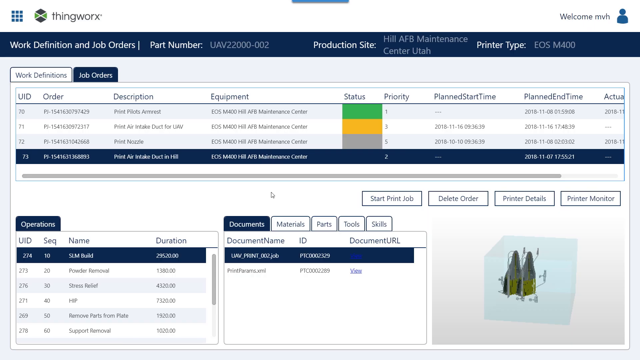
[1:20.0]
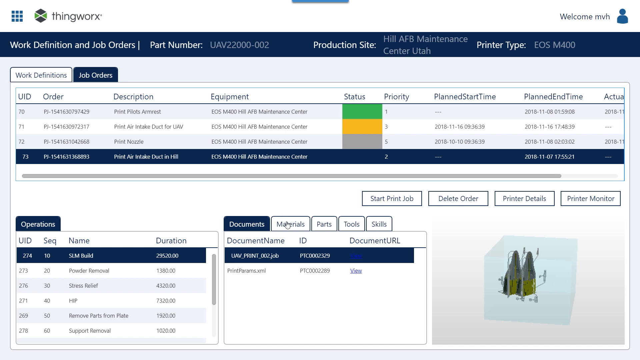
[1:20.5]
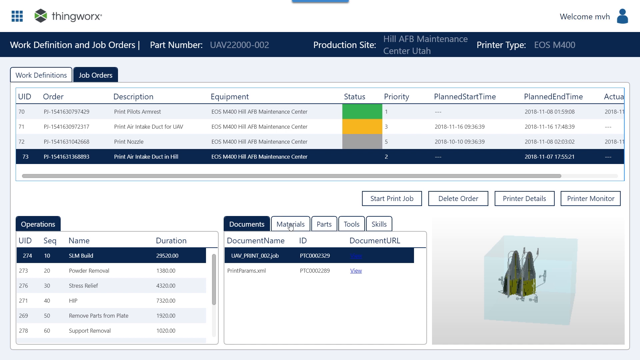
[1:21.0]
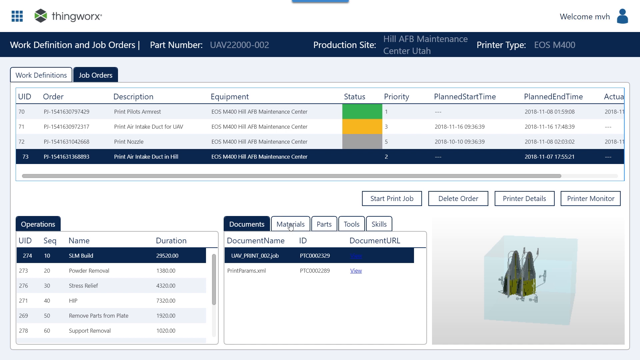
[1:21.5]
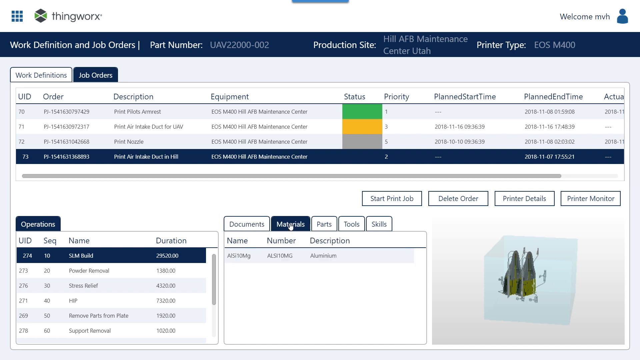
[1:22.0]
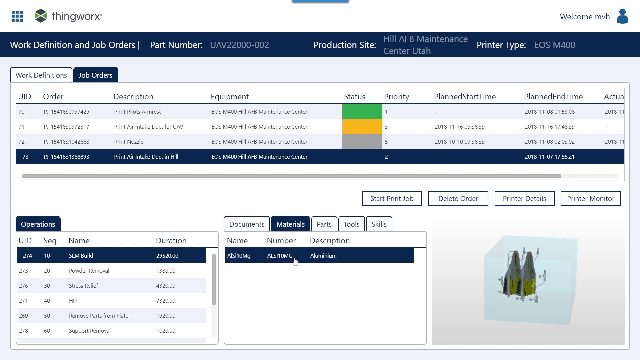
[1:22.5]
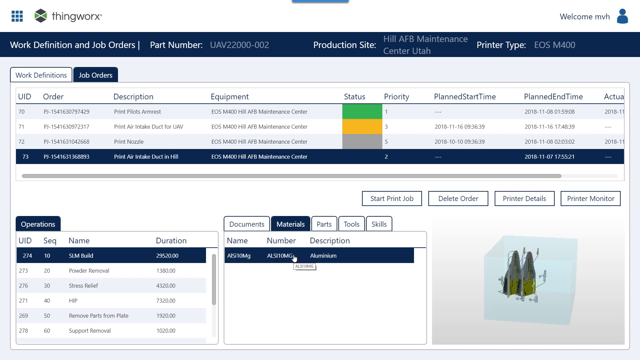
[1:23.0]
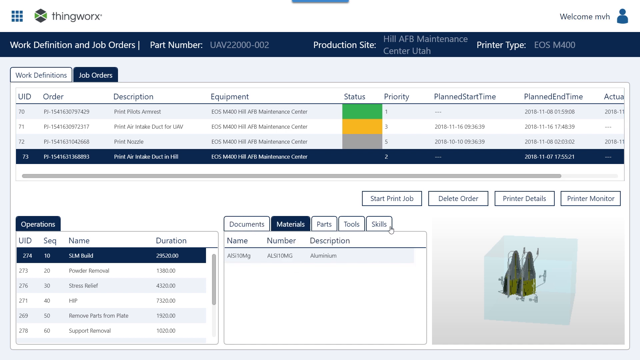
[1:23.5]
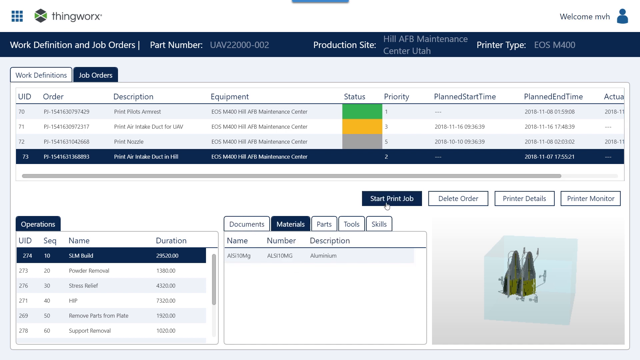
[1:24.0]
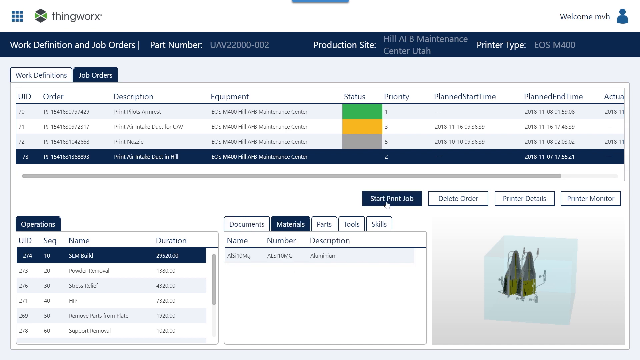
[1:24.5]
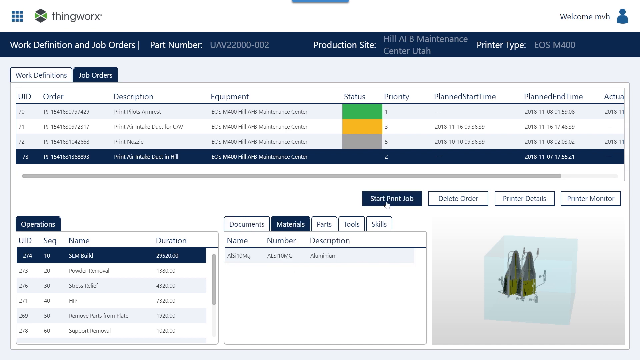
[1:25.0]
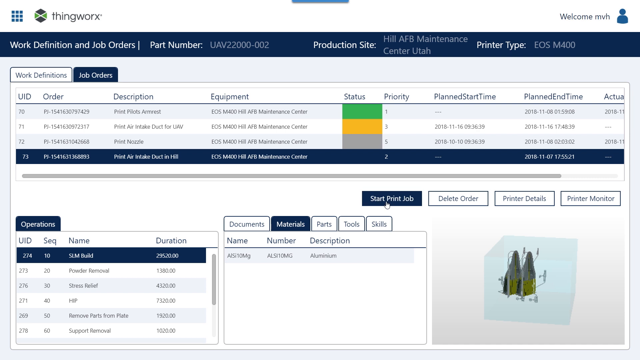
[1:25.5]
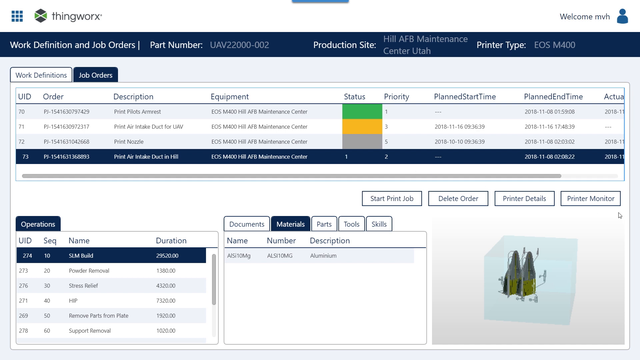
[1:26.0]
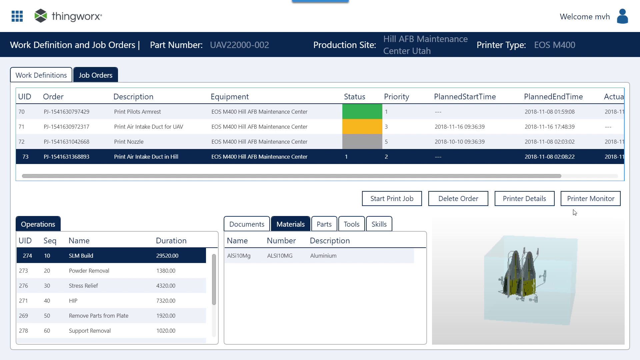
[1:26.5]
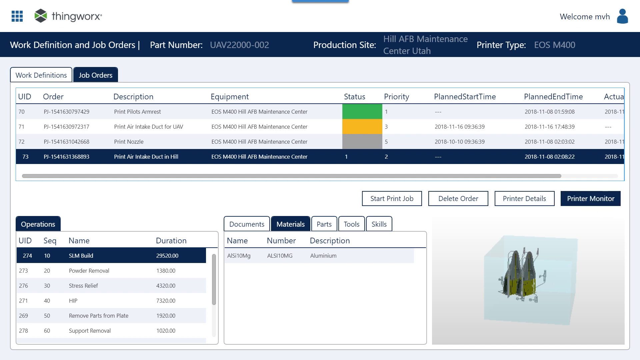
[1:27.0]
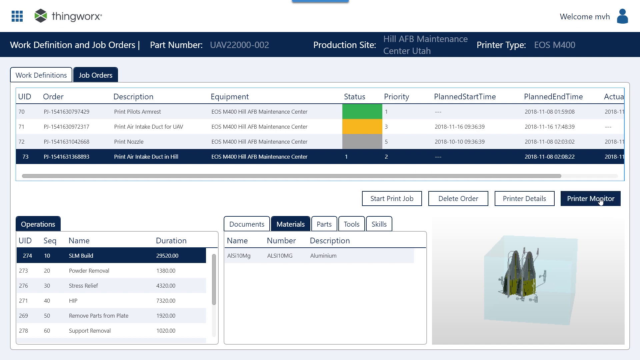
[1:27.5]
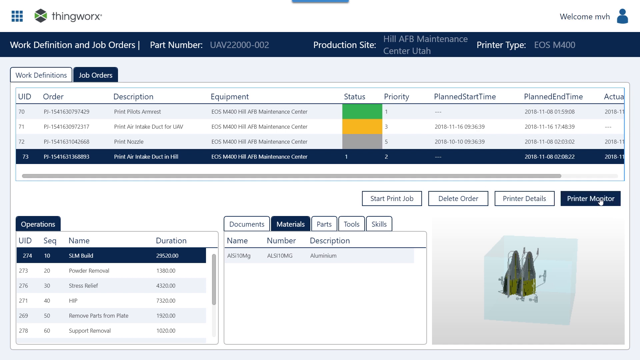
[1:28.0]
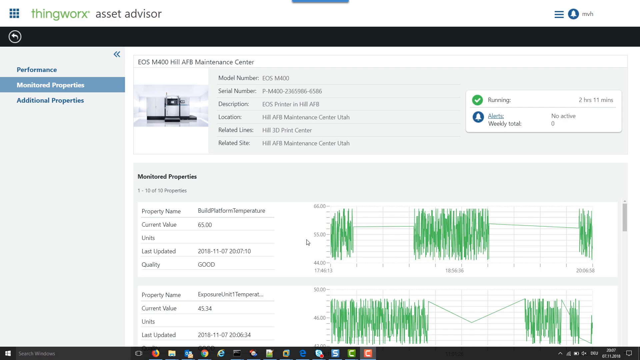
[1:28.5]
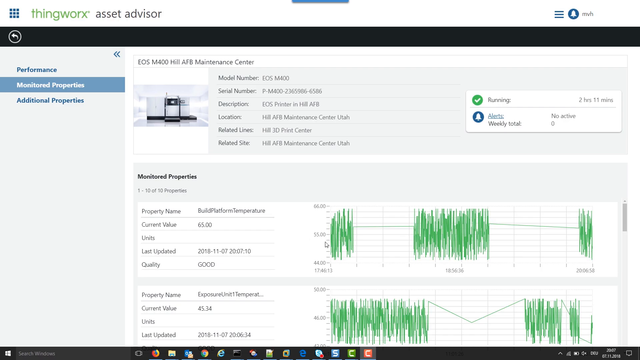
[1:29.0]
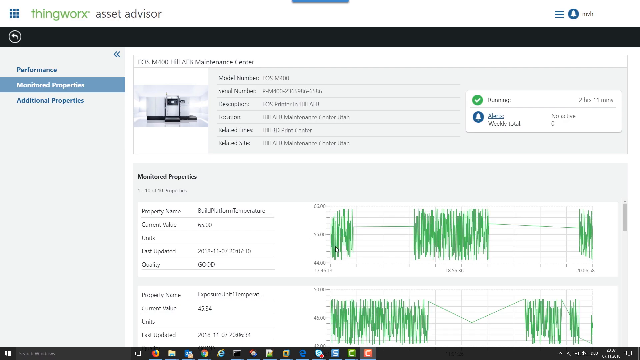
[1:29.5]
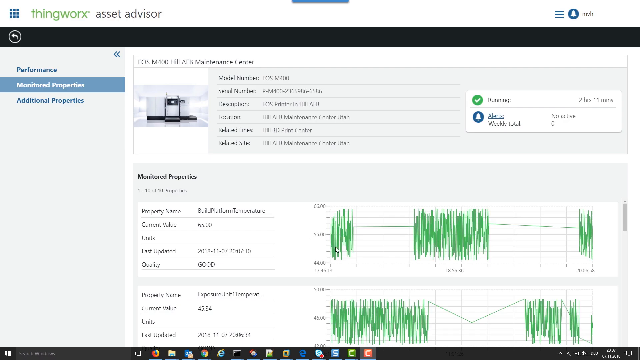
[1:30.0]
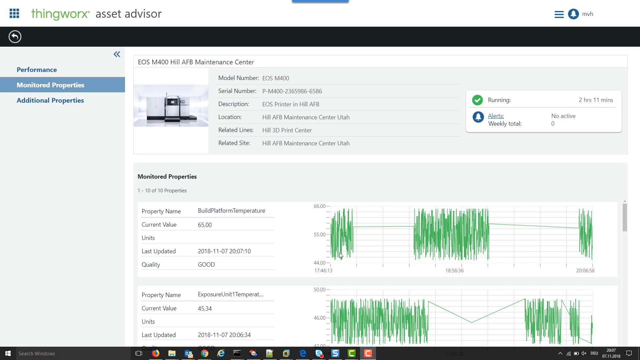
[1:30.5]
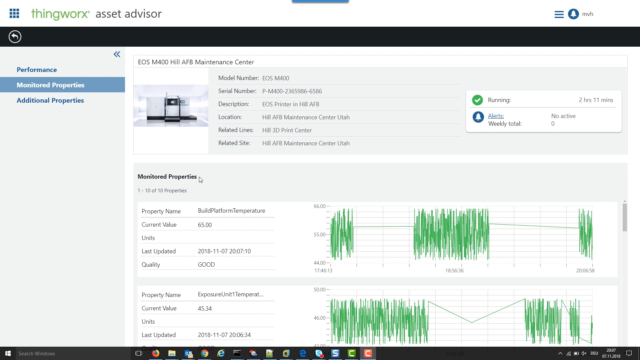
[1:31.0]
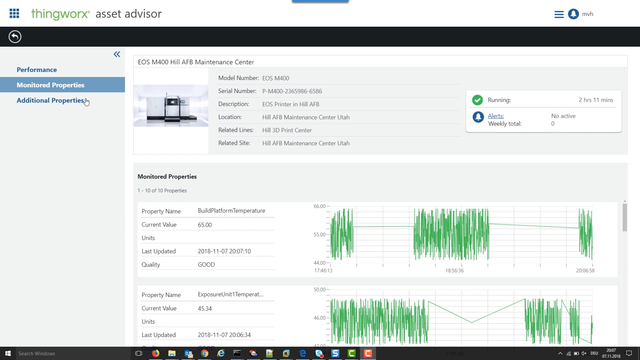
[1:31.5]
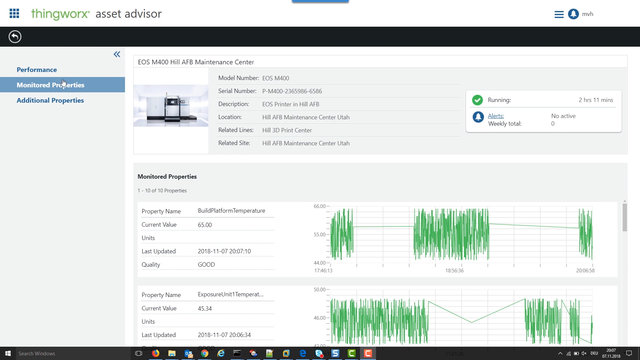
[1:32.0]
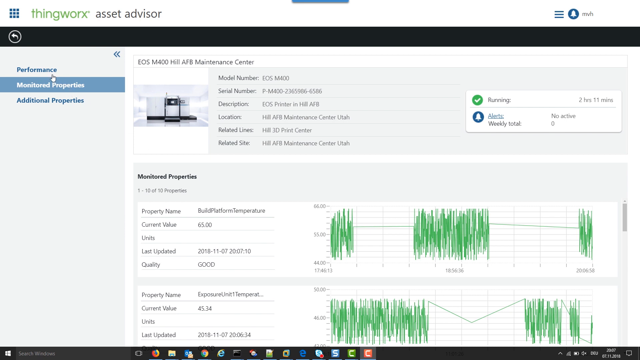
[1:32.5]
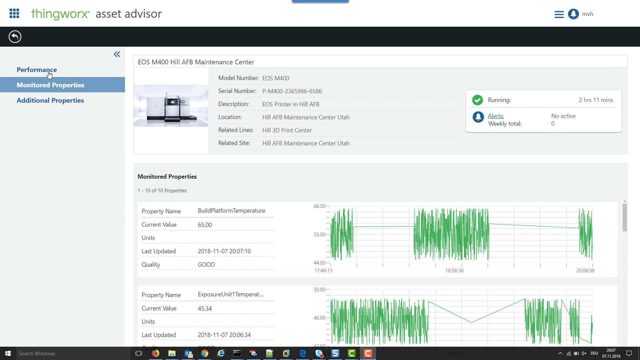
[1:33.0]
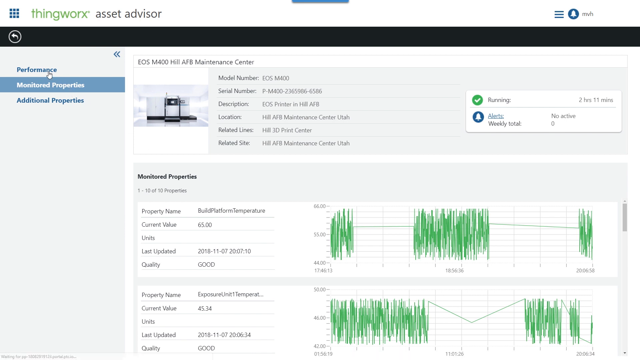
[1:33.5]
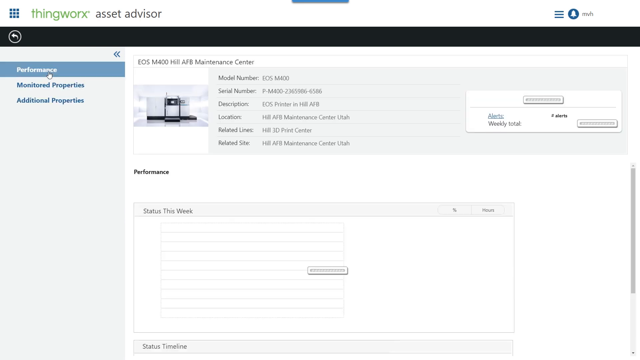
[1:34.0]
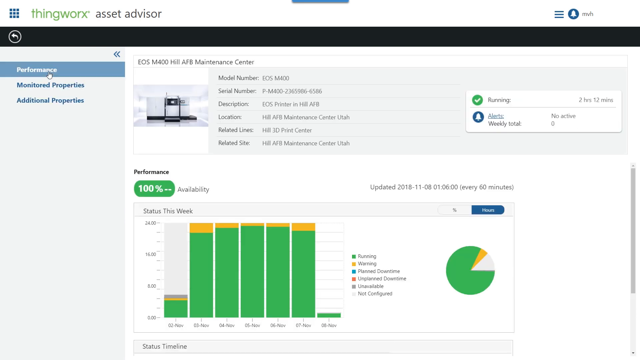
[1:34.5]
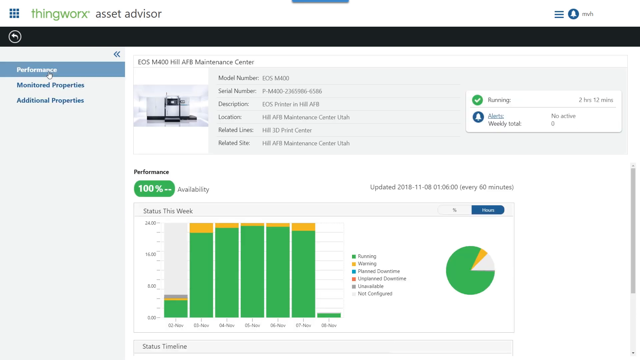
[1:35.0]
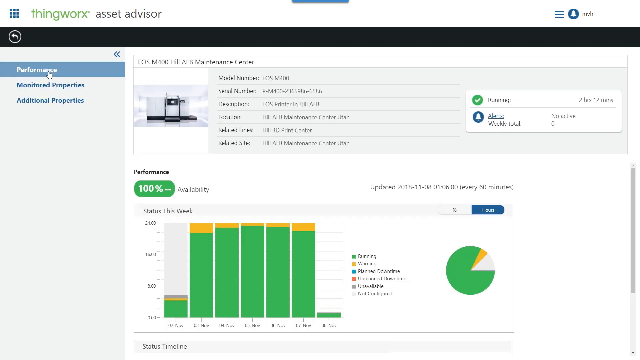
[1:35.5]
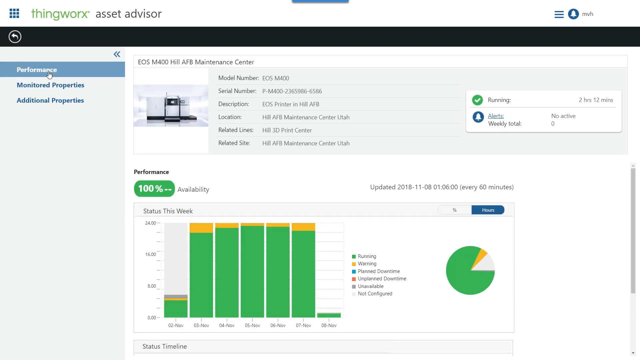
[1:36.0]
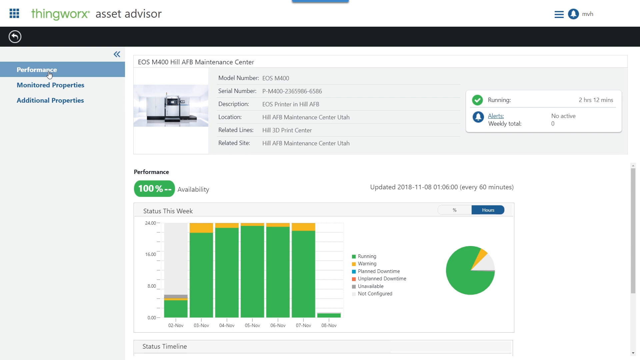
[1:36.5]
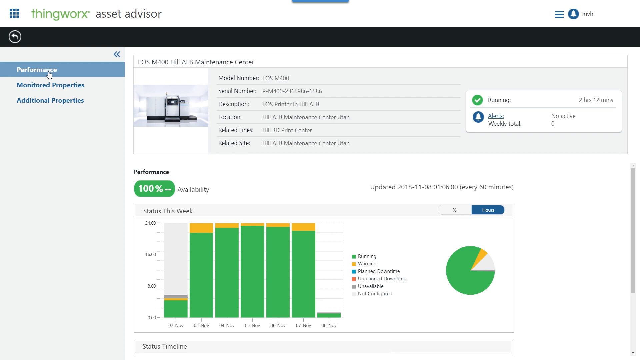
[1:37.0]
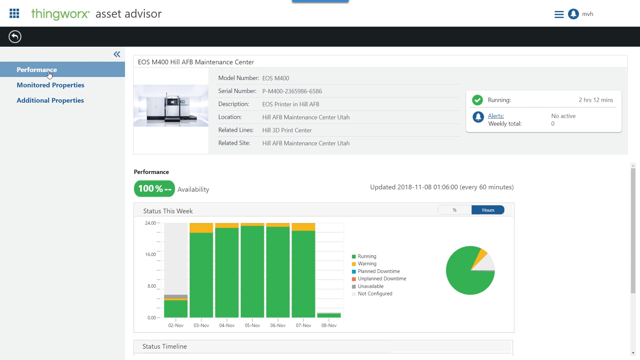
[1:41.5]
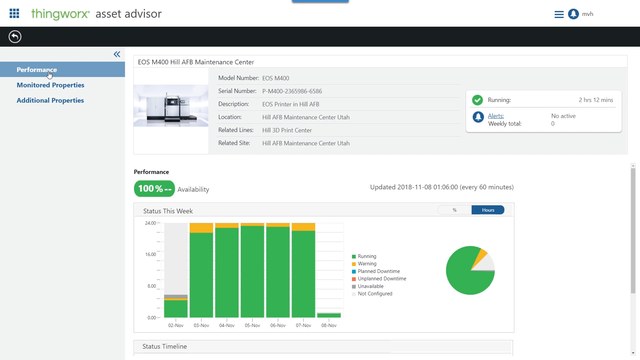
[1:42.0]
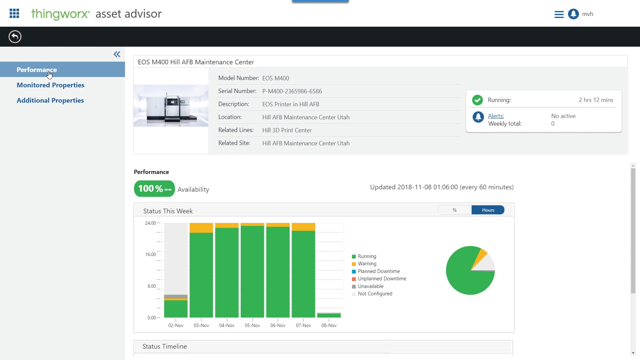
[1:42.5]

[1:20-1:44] A screen capture of a computer shows software titled ThingWorks, on the page that says "Work Definition and Job Orders". The user selects the materials options towards the middle bottom of the screen and clicks the option that is available. They then click "Start Print Job" and slide the mouse across to "Printer Monitor". Clicking it leads to a "ThingWorks Asset Advisor" page, with two charts towards the bottom of the page and the printer's maintenance system at the top. The user then clicks "performance" on the left tab side, and the window changes to show a bar graph and a pie chart in green and yellow. The user then pauses, not doing anything.